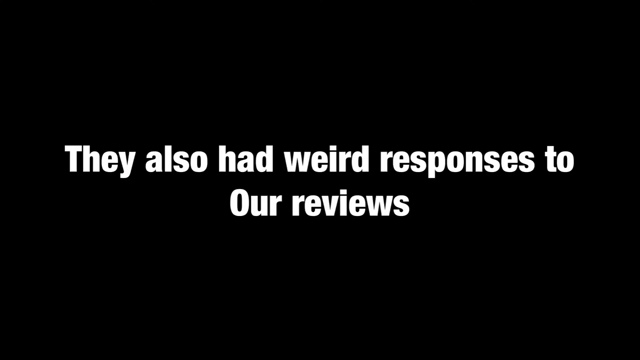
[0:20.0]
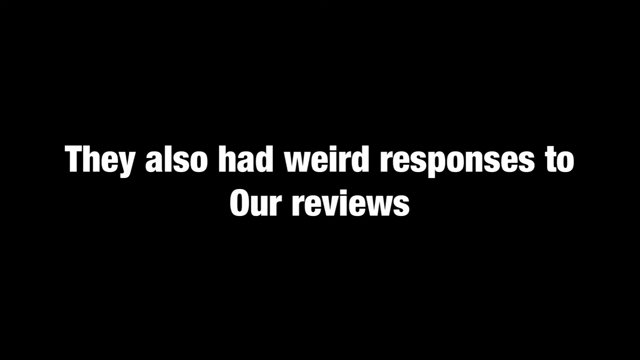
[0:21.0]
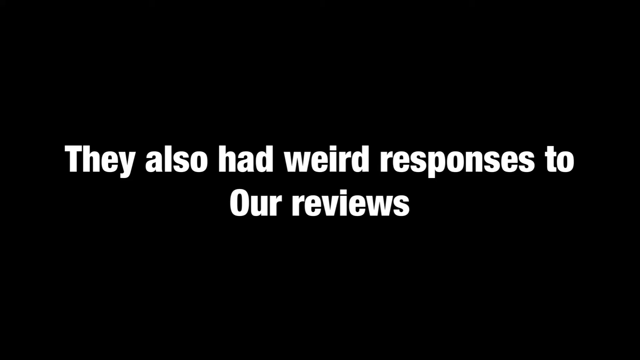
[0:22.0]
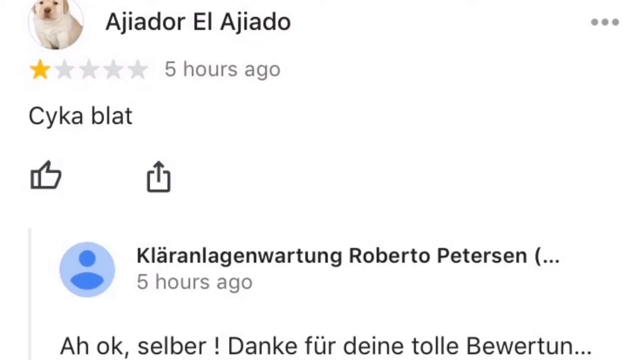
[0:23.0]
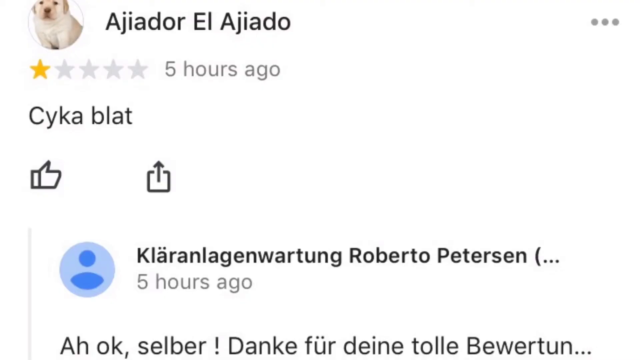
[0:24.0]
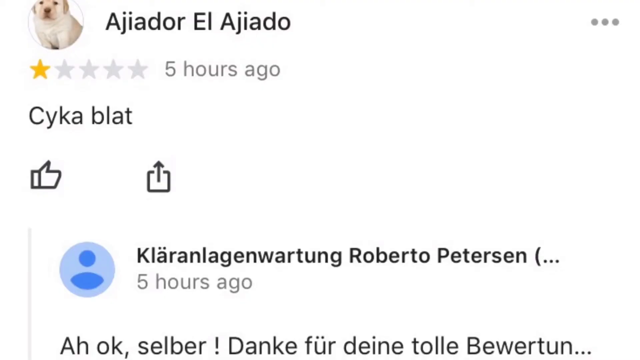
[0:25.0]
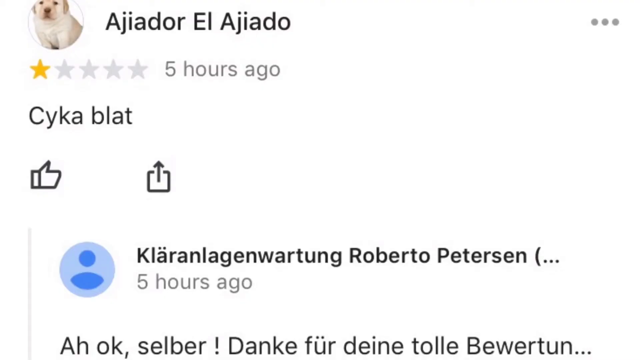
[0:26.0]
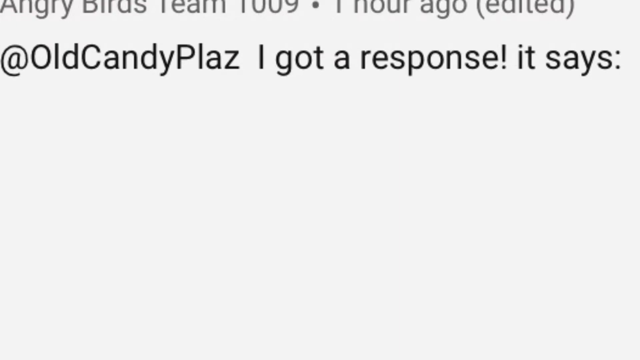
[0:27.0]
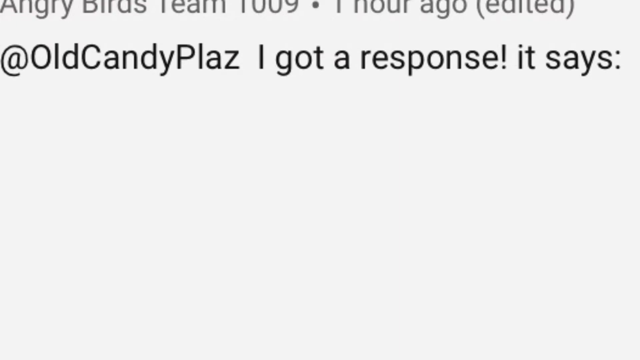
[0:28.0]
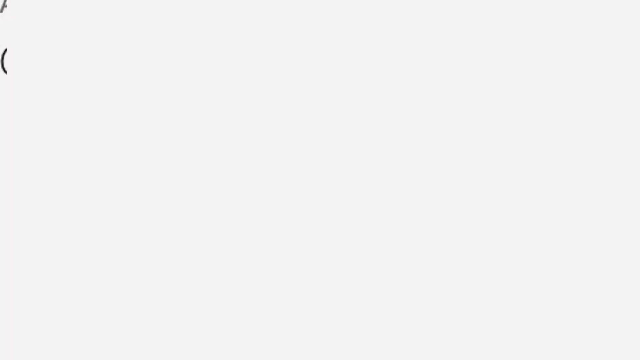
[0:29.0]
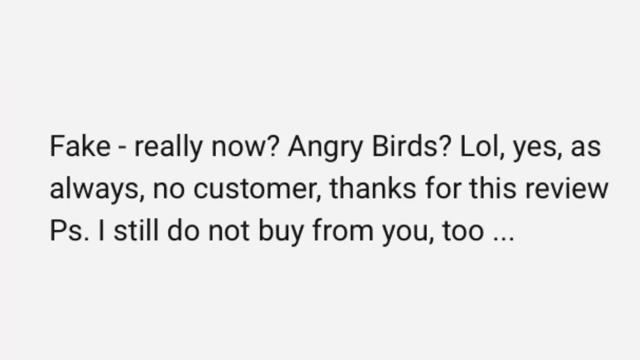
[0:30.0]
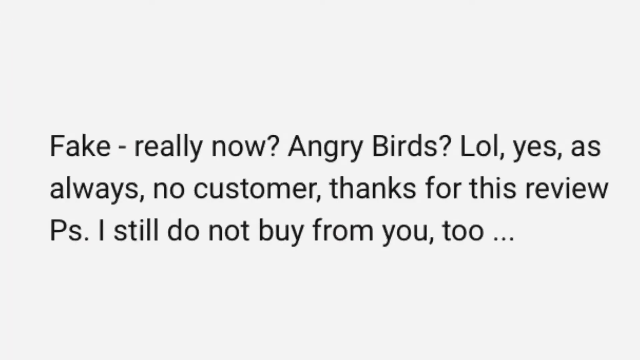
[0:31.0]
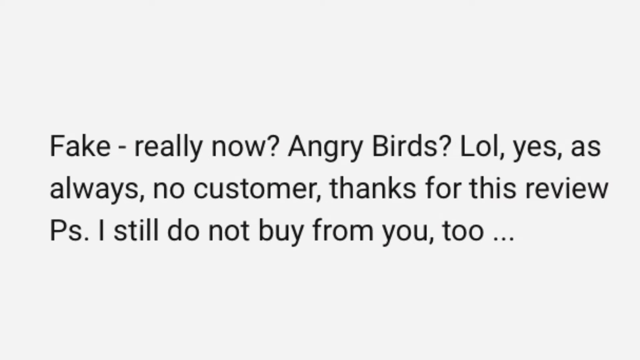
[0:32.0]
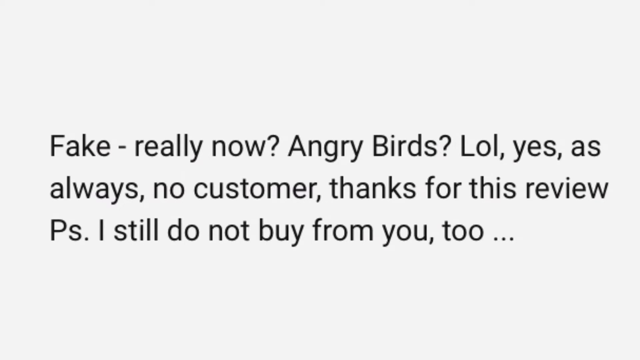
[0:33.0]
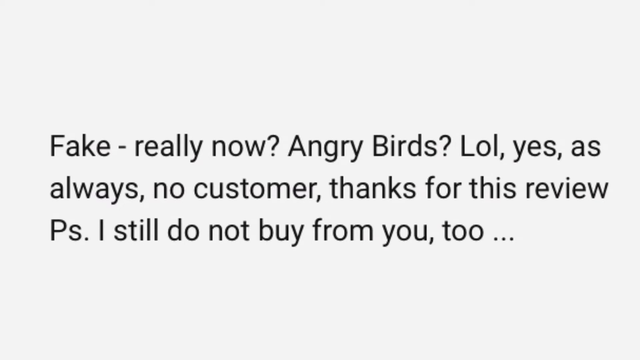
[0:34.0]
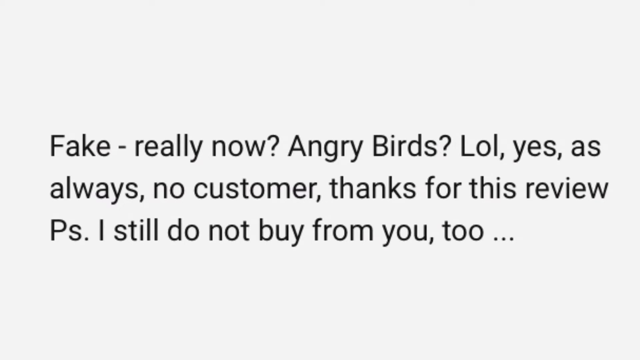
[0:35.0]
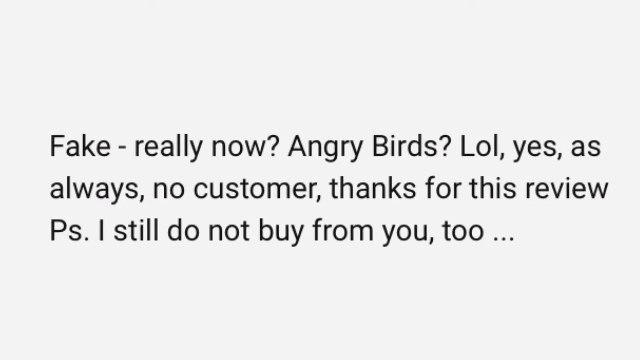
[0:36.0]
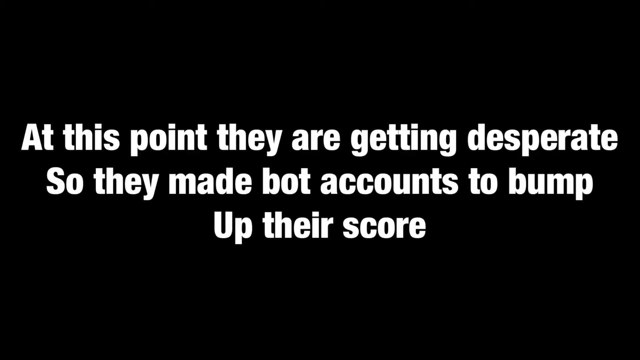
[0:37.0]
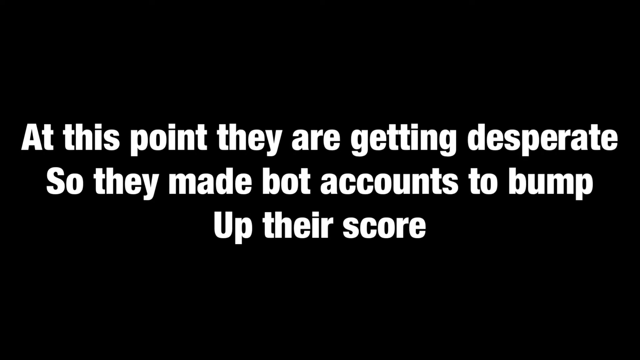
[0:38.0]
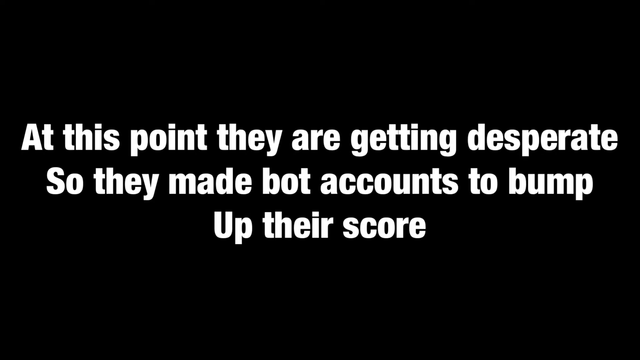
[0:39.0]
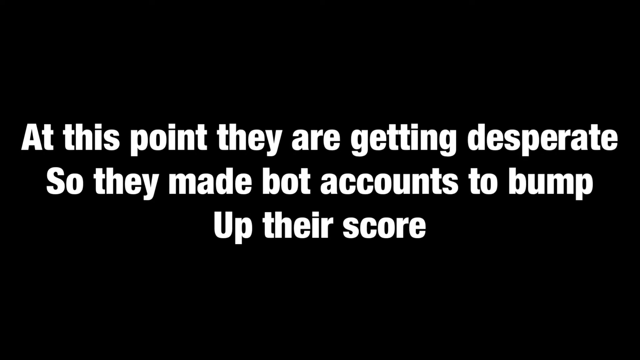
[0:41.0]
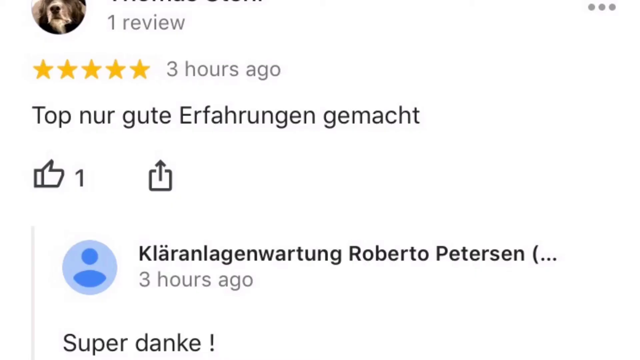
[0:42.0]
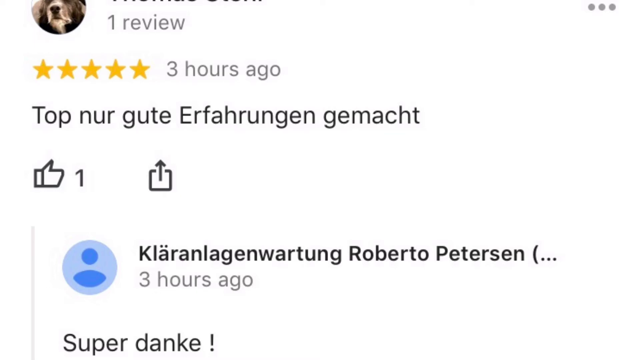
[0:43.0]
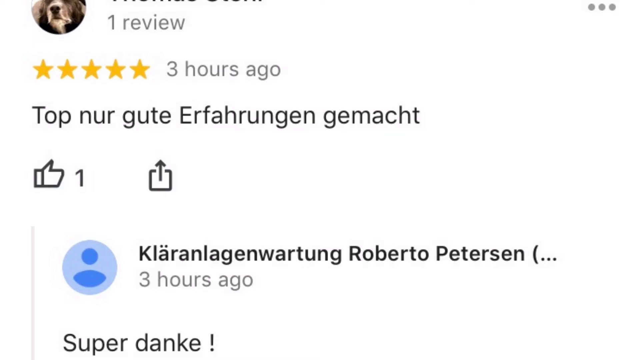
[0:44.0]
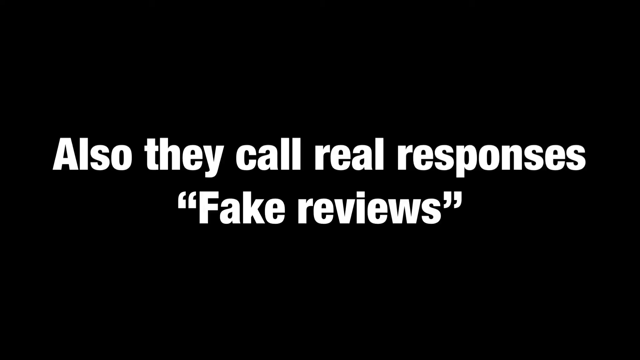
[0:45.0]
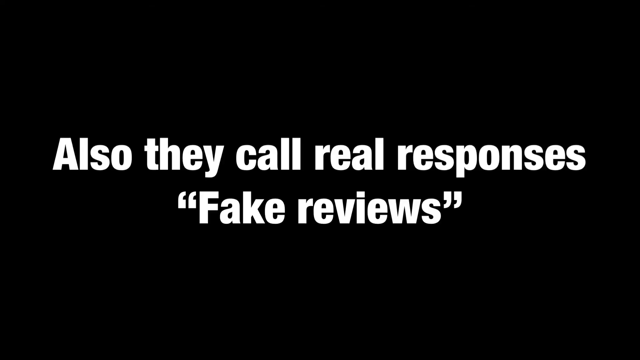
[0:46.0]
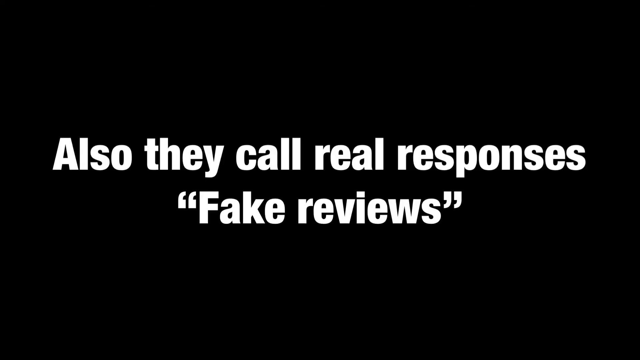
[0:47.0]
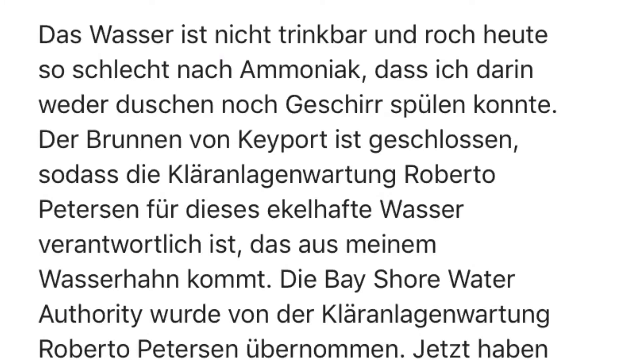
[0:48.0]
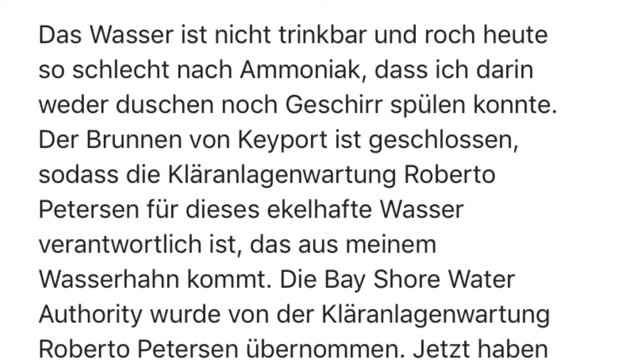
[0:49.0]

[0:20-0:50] Text reading "they also had weird responses to our review" appears in white on a black background. The video transitions to a social media post by a person called Ajiador El, whose profile picture is a white dog, giving a one-star-out-of-five review with the time "five hours ago". Text shows the name "Klaranlagenwartung Roberto Petersen". Three dots are in the top right corner of the screen, and at the bottom there are a like icon and an upload icon. Below that is a name with "five hours ago" beneath it. The video then shows text reading "angry bird team", "one hour ago", marked as edited, with the username "old candy". Further text reads "fake. Really now? Angry birds? LOL. Yes. As always, no customers. Thanks for this review. P.S. I still do not buy from you." in black on a white background. The video transitions to text reading "at this point, they are getting desperate. So, they made bot accounts to bump up their score" in white on a black background. Additional social media posts appear: one has a dog icon as the profile picture, "one review", a five-out-of-five-star rating and "three hours ago", with German text meaning "stop now"; below it is the name Clarence with "three hours ago". Text reading "real responses, fake review" appears in white on a black background, and the video transitions to text written in German.